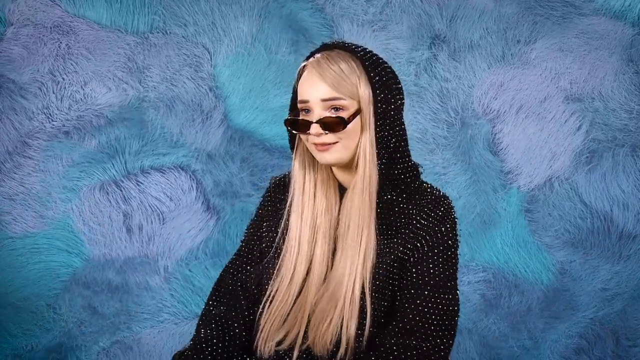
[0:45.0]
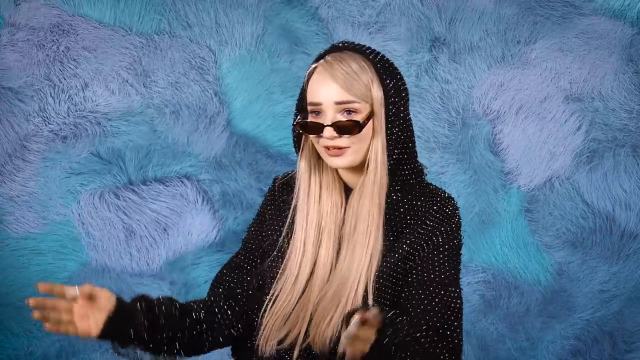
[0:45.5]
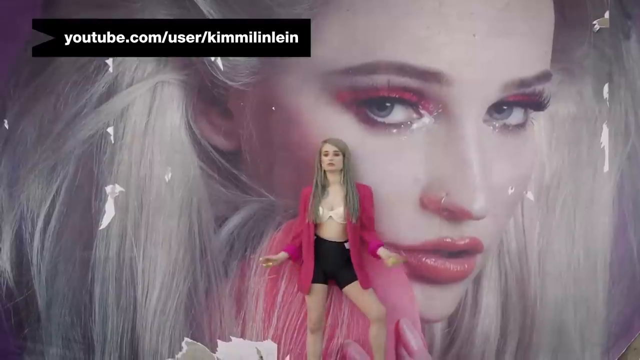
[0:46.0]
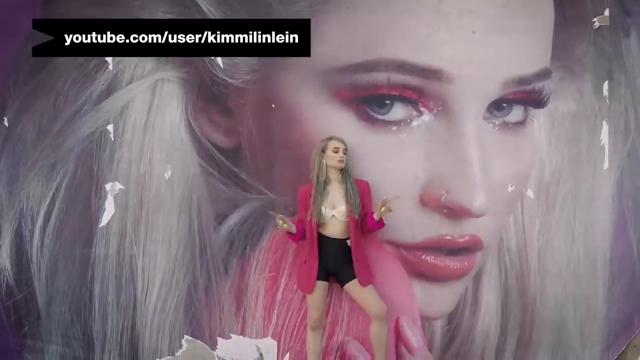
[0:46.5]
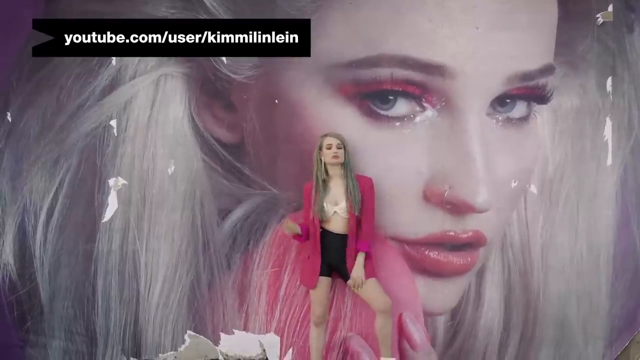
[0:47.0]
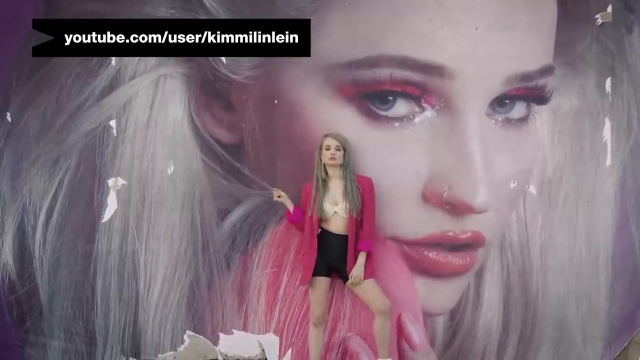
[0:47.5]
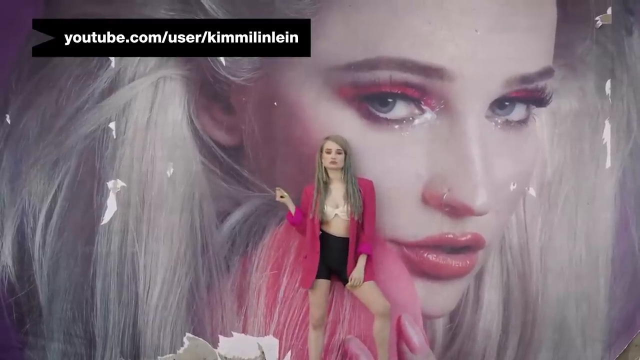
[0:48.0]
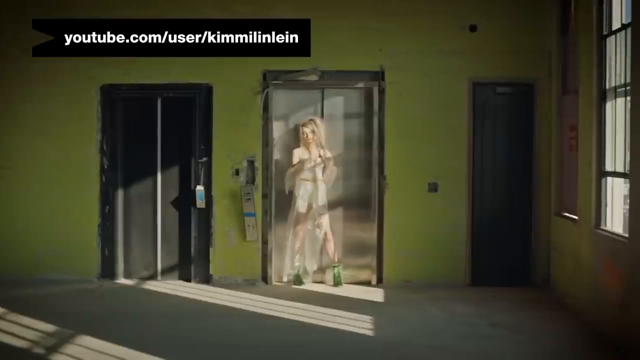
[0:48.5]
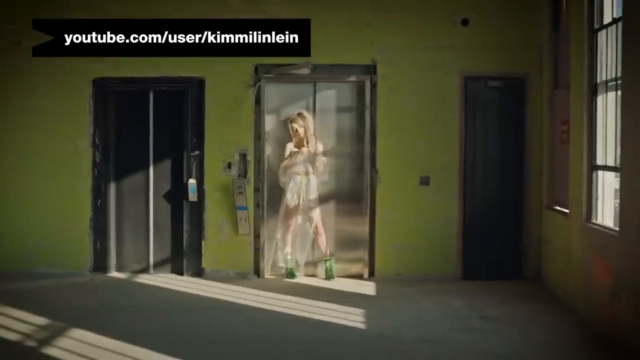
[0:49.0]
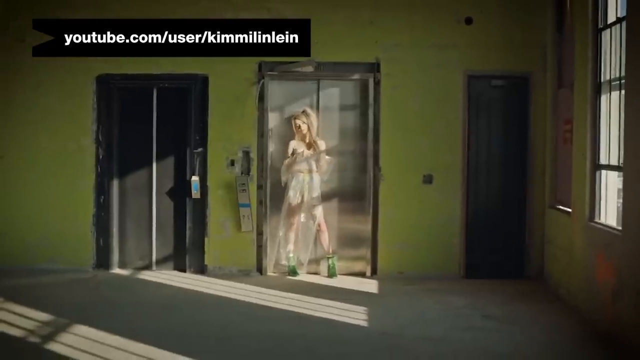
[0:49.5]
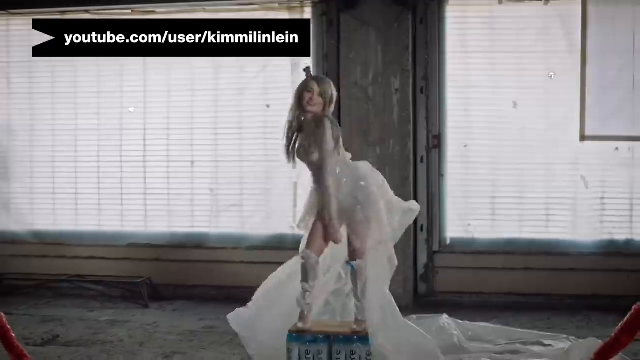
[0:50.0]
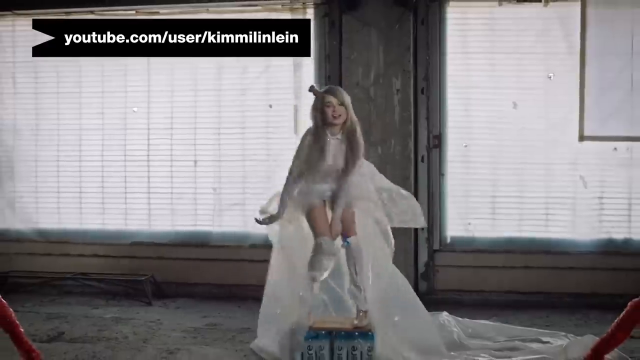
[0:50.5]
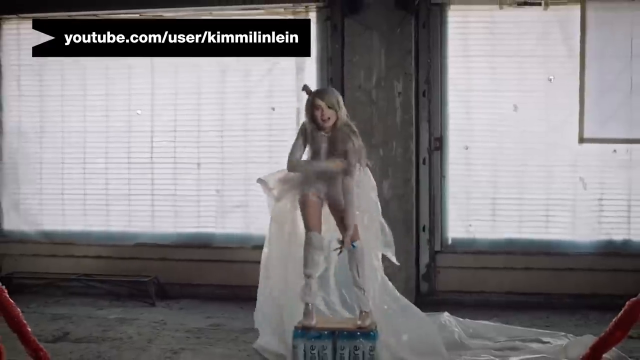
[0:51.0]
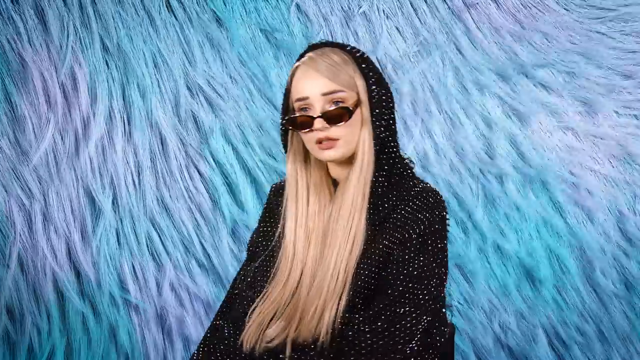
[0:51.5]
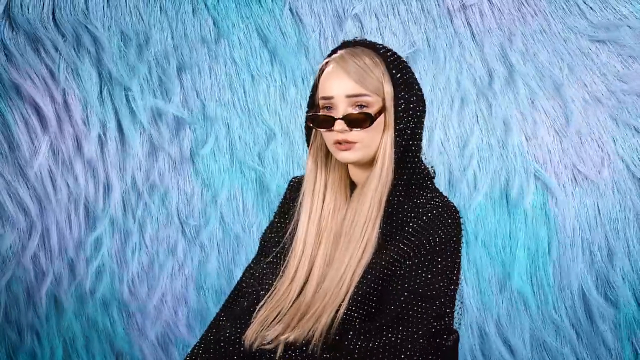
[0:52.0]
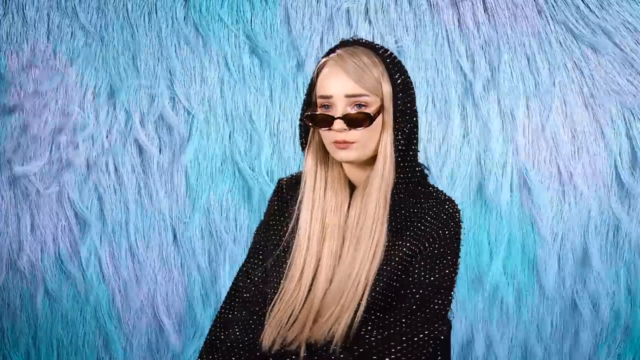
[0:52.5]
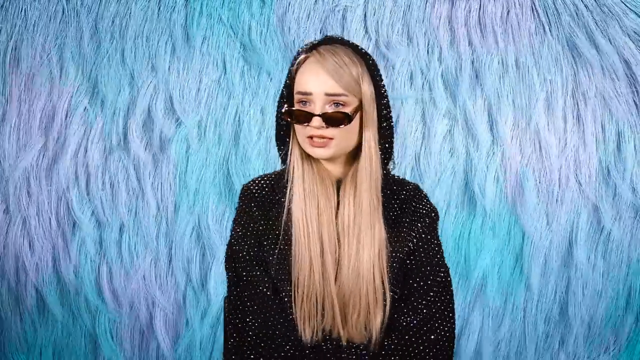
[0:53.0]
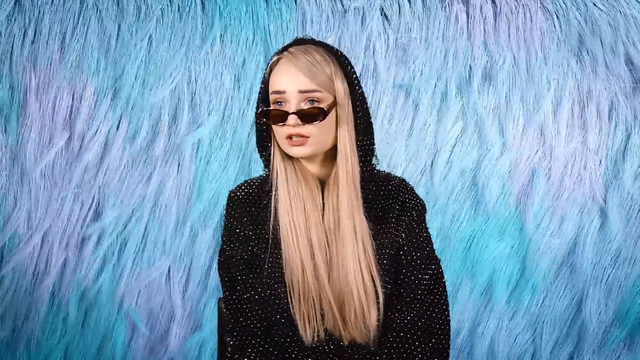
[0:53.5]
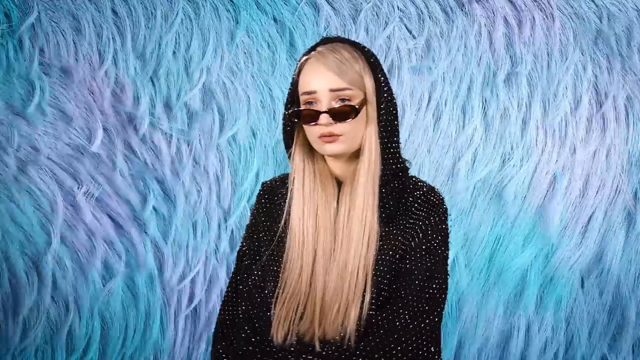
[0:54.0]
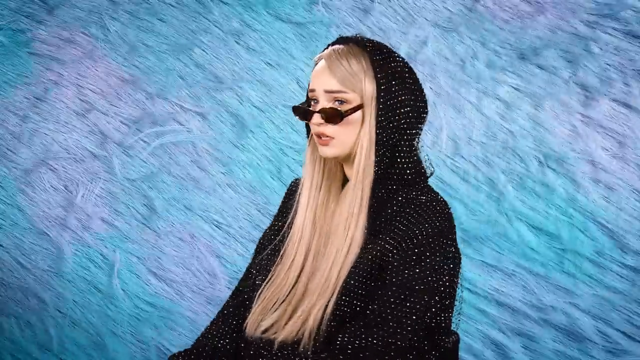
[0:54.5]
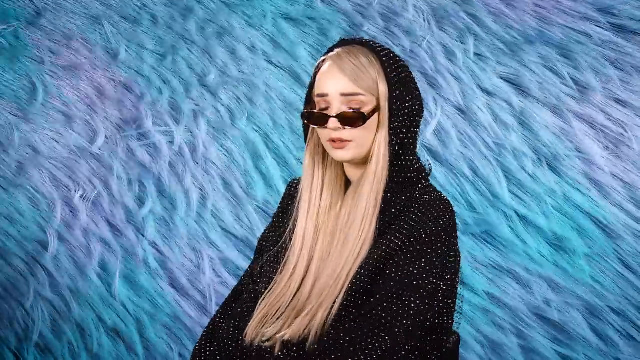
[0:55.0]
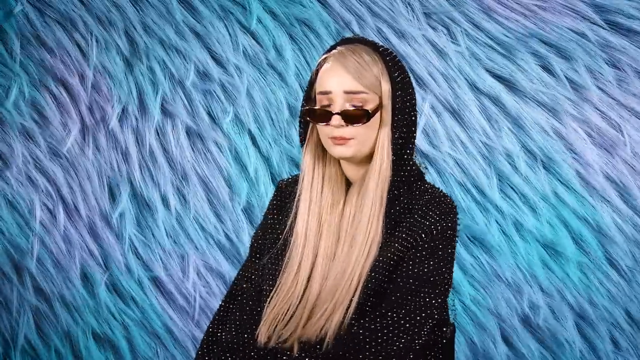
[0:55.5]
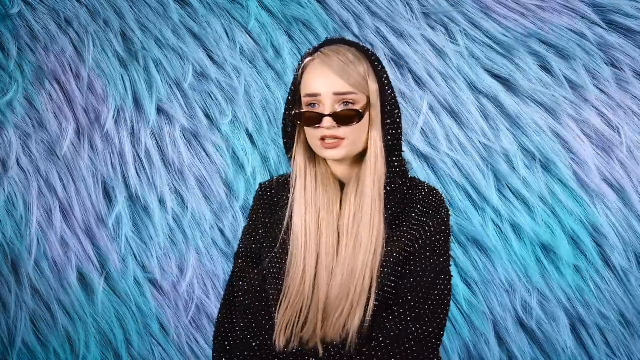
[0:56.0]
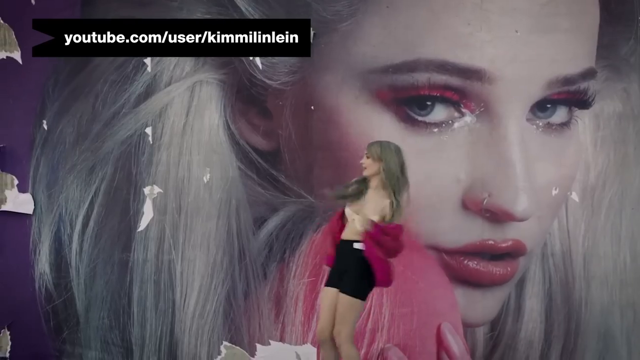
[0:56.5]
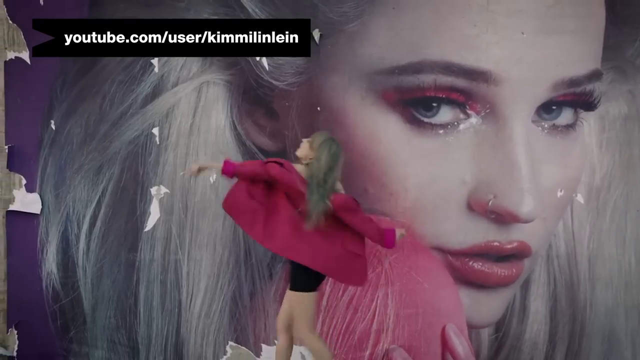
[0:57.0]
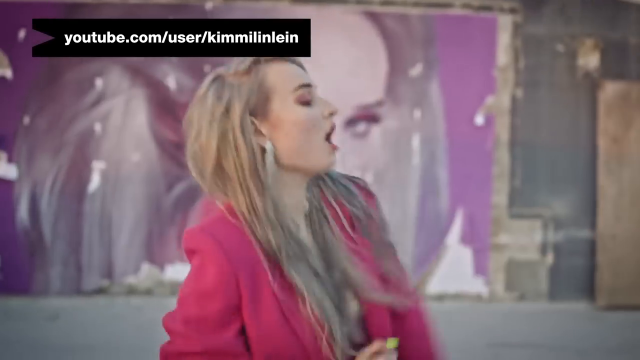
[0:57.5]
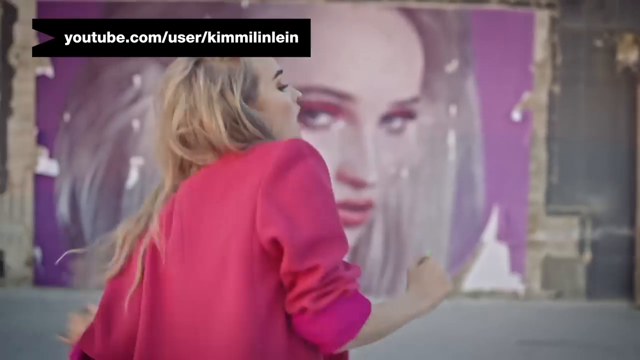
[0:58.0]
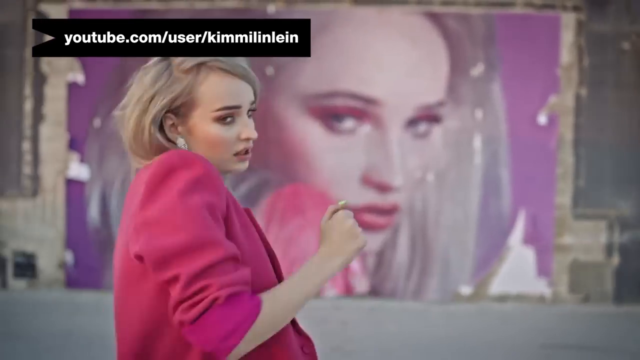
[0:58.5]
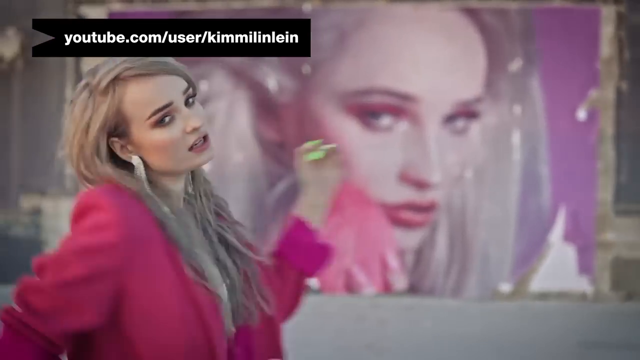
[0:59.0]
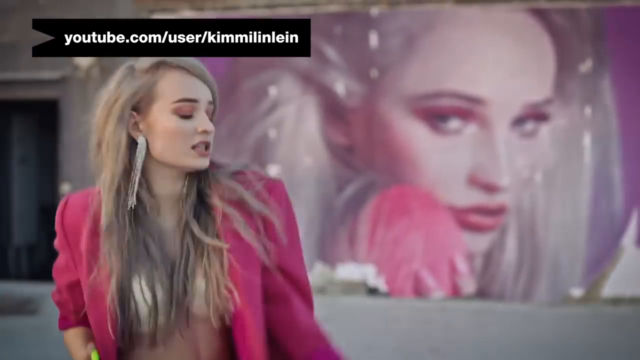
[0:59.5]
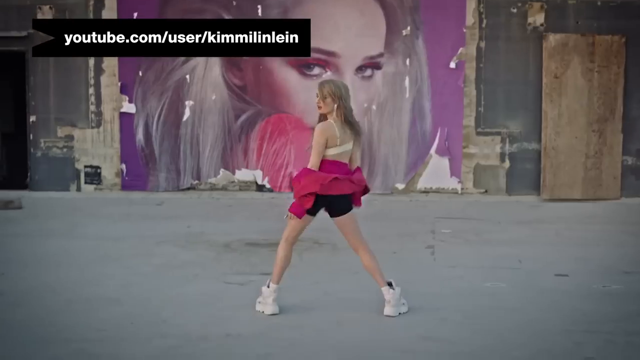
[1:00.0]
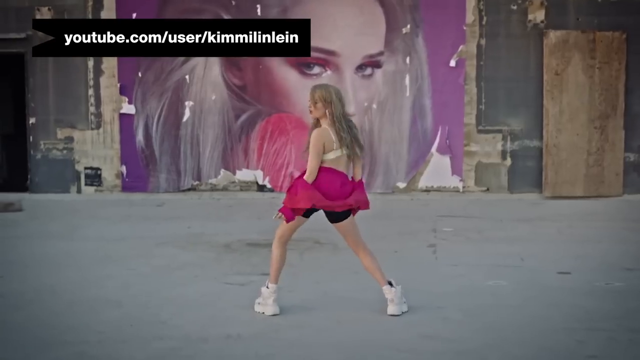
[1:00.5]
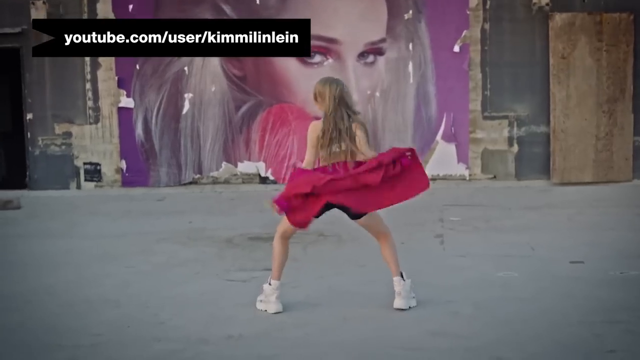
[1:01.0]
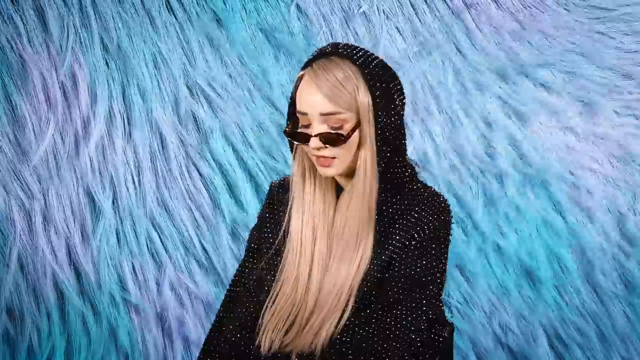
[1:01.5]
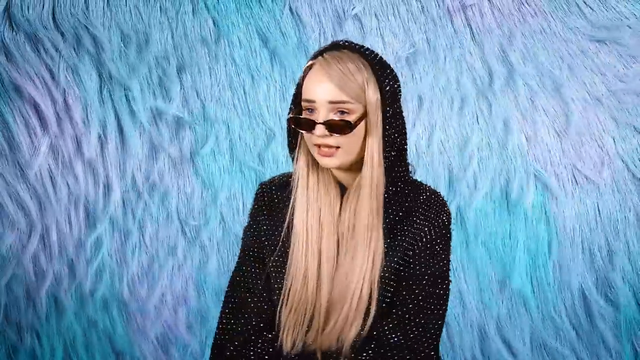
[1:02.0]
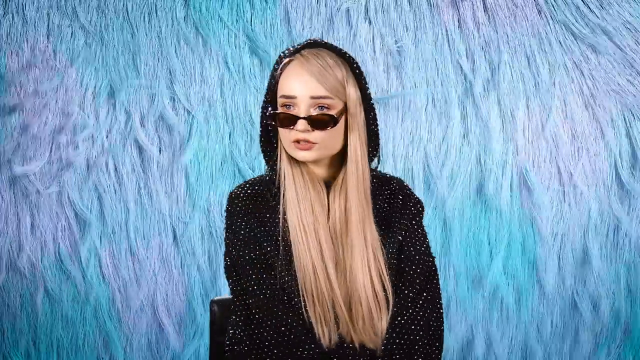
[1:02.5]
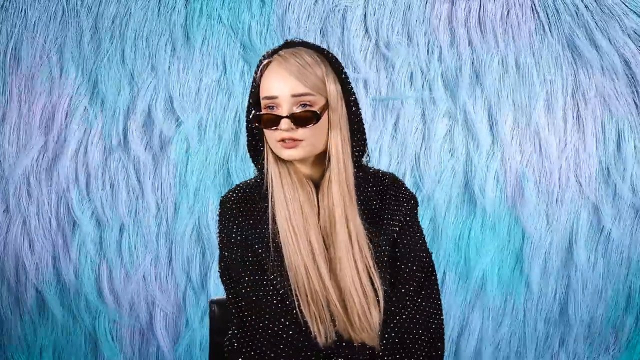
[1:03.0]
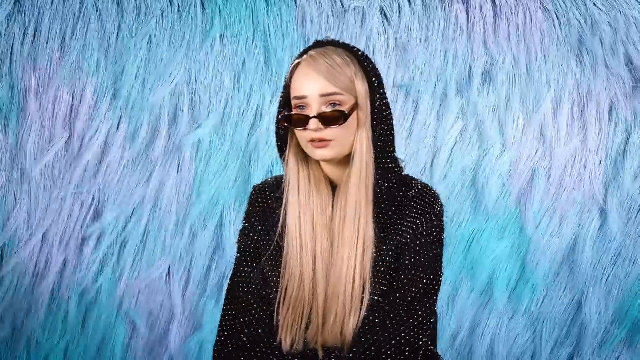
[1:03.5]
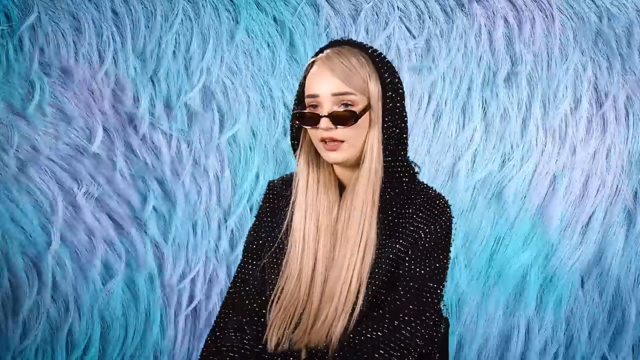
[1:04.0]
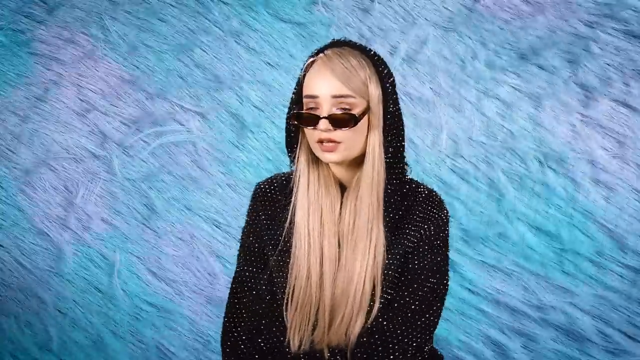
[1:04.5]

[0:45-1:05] The person sits in a black chair in front of the furry, moving light purple and light blue background, but it quickly changes to other clips of the same person, long blonde hair down, standing in front of a building that has their face on it. Another clip shows them dancing in a building, then it returns to the interview as the person keeps talking. It cuts away again to the person, wearing white, apparently dancing in an abandoned building and standing on a carton of something. Another clip shows them standing in front of an elevator, and yet another shows them dancing around in a pink jacket, short black stretchy shorts and white high-top shoes.